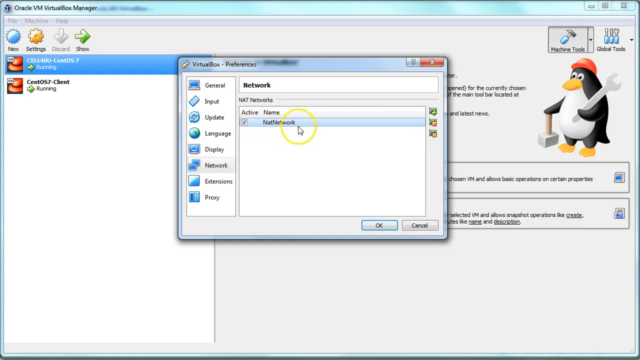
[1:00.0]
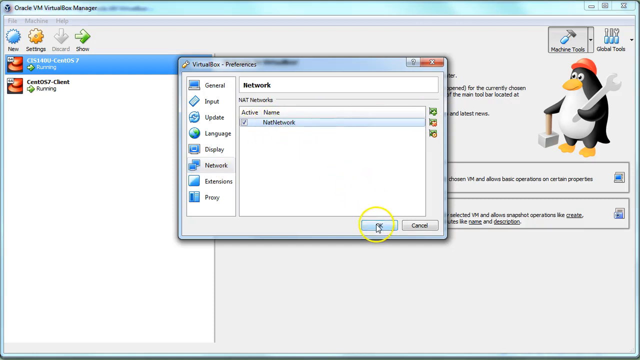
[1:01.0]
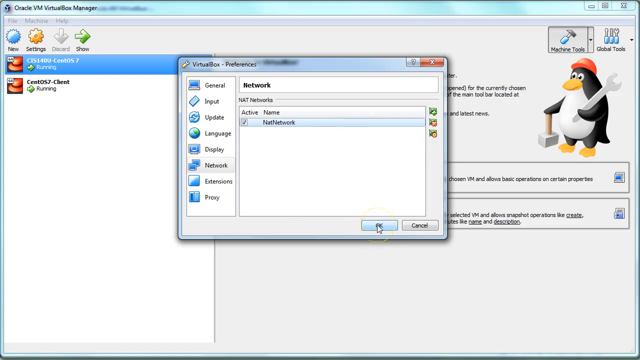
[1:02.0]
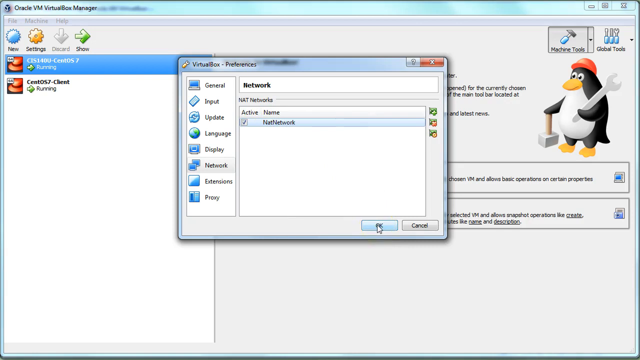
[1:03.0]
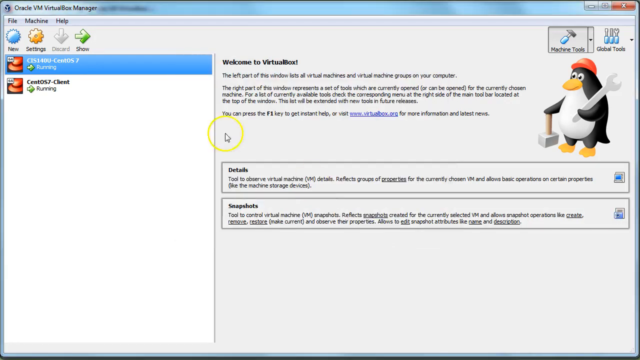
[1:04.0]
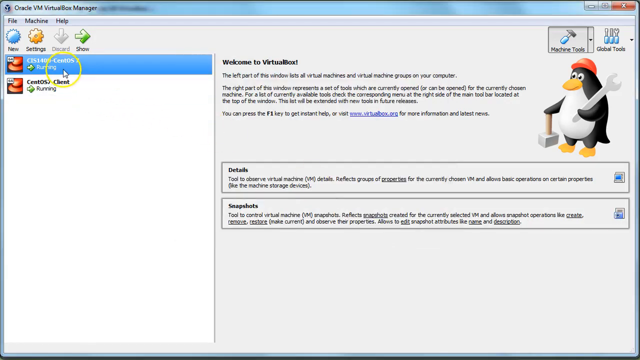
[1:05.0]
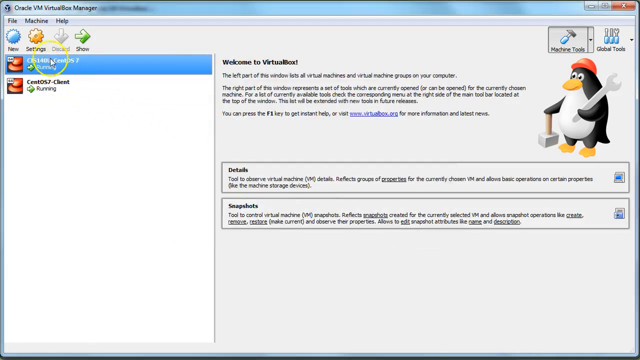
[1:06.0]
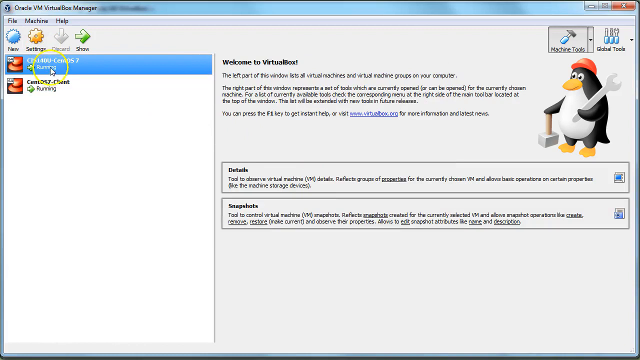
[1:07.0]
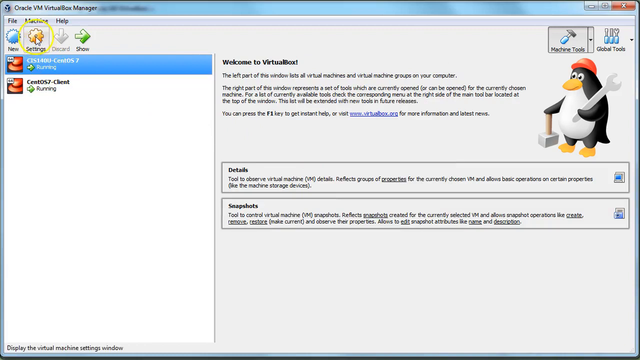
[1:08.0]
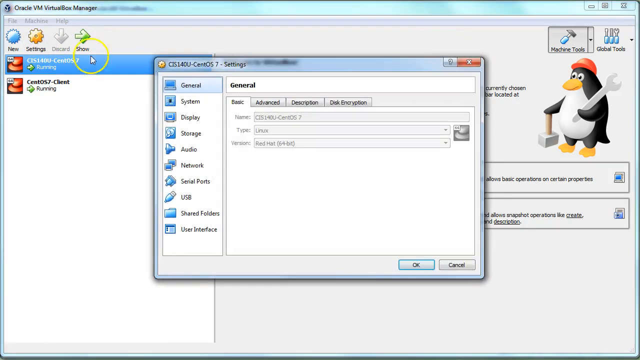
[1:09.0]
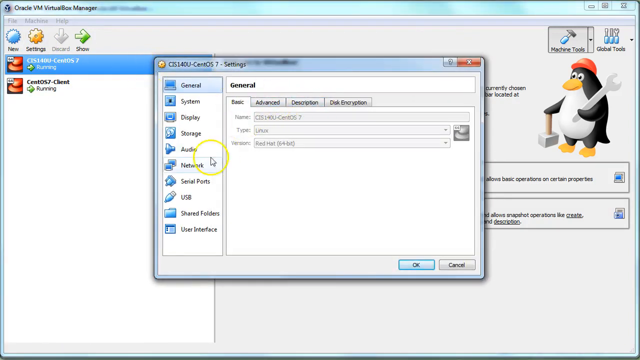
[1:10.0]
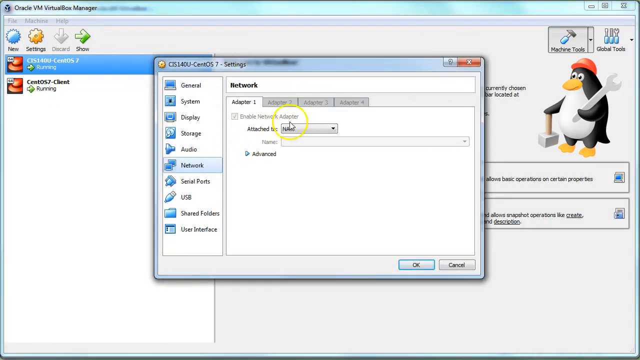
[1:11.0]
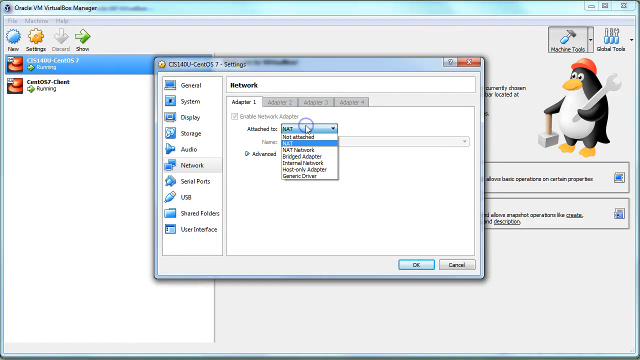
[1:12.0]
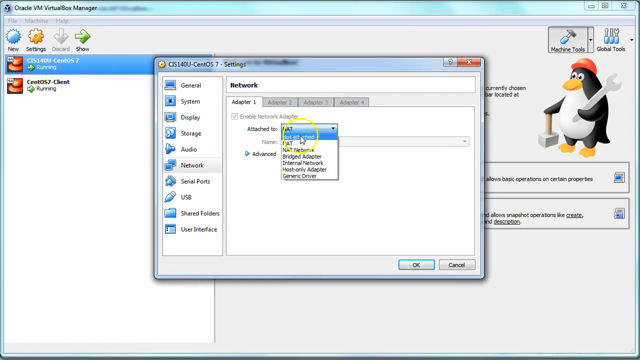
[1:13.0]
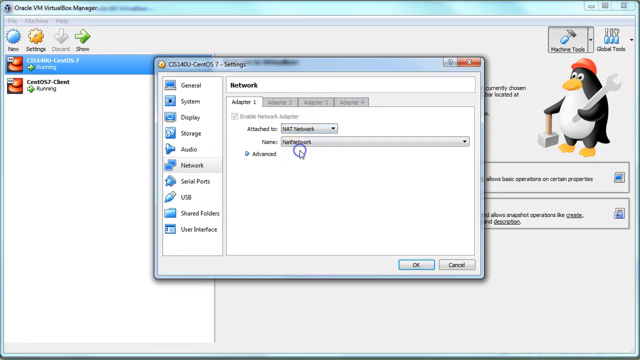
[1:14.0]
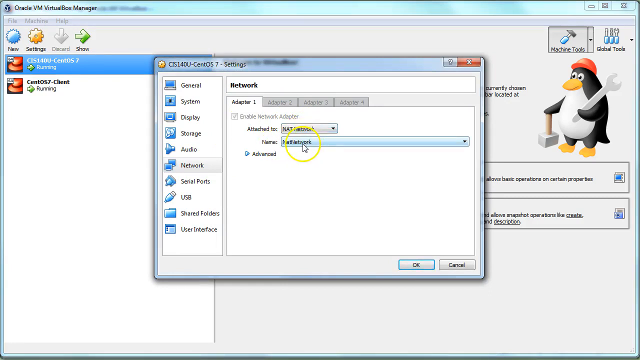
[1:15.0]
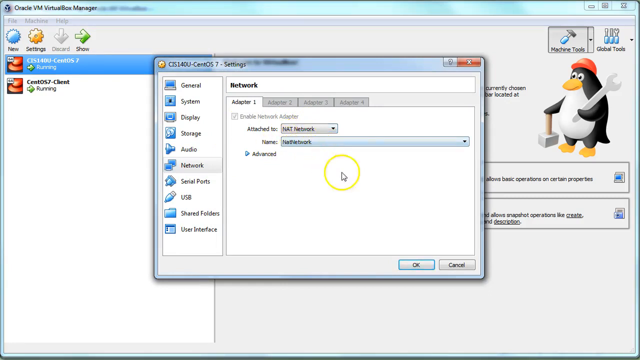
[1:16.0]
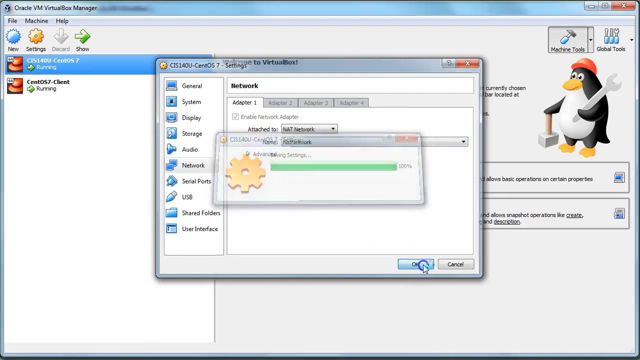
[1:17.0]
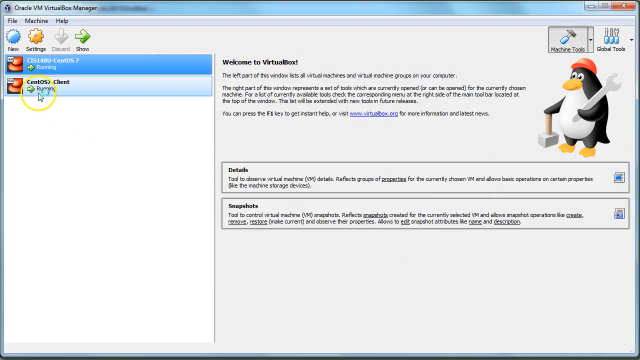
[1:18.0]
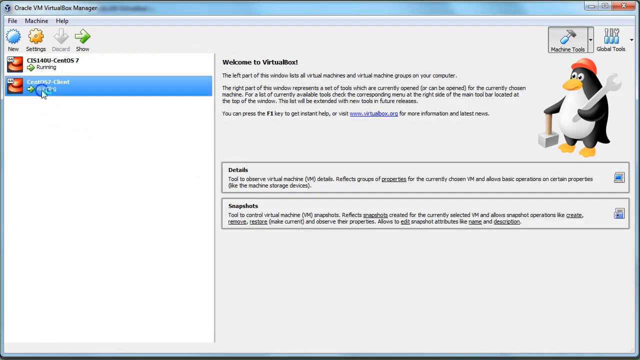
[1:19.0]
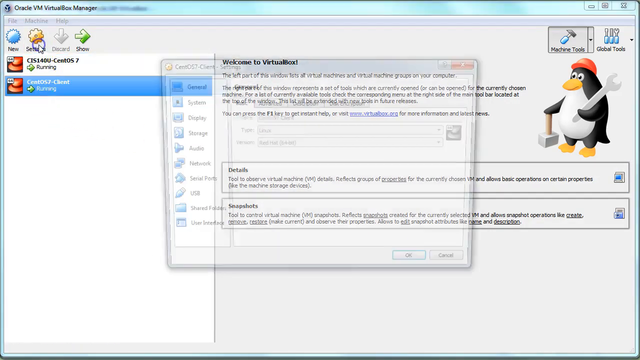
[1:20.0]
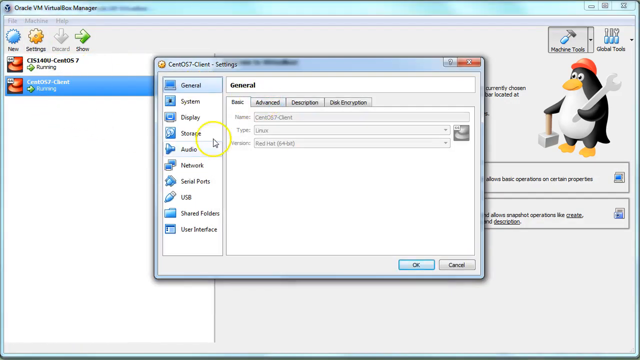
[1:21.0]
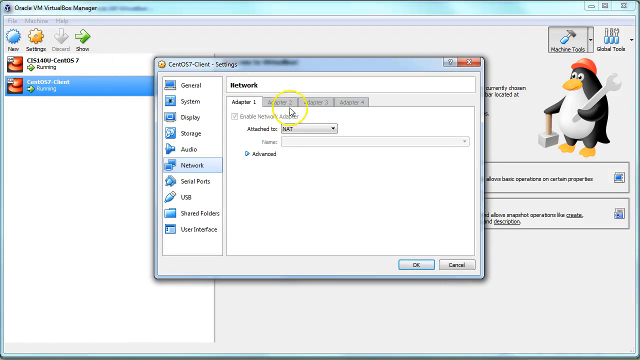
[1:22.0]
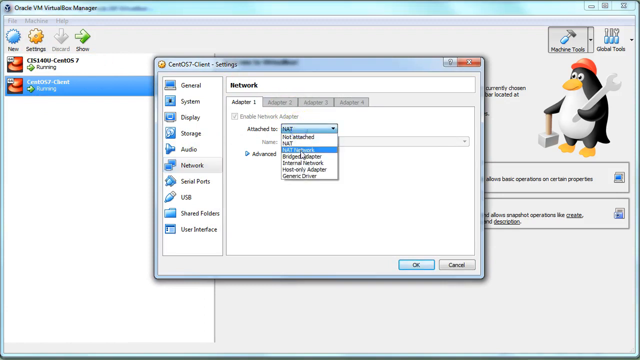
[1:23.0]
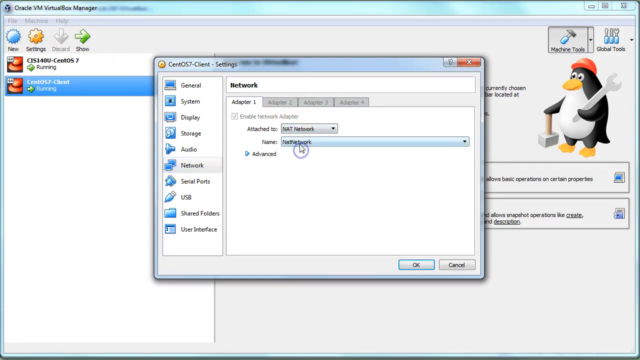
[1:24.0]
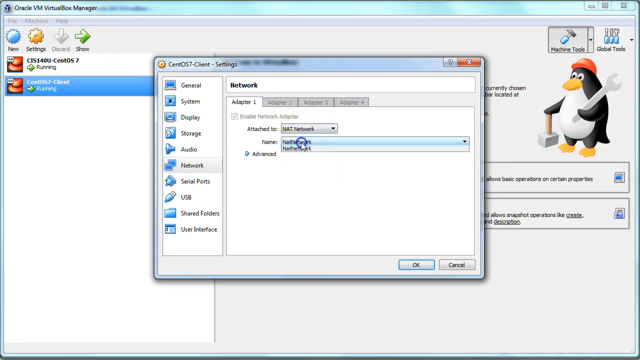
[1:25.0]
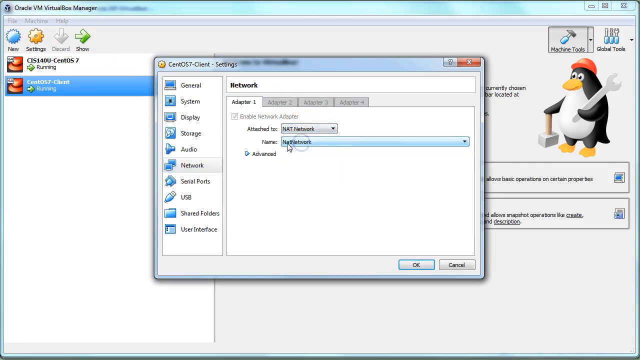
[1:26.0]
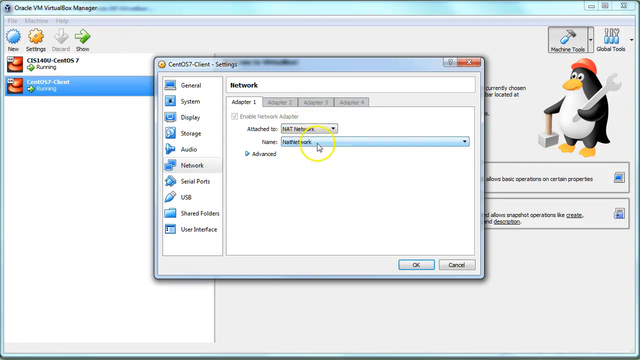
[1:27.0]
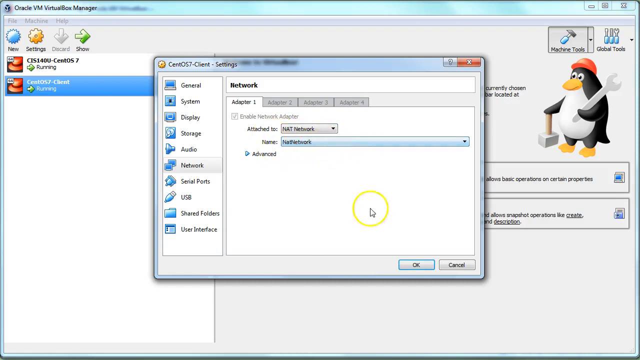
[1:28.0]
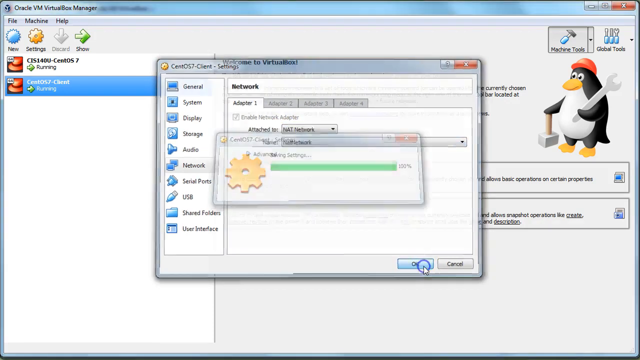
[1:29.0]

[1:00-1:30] The VirtualBox preferences menu is in the middle of the screen, with the network preferences selected on the left. In the center it shows the networks, with the one he just added, called NAT Network, as the only entry. In the background is the main page of the Oracle VM VirtualBox manager, showing his two VMs in the left panel and the introduction text on the right. His mouse clicks OK on the preferences menu, removing it from the screen. He then clicks on the first virtual machine at the top left of the panel, then clicks Settings above it, and the settings for that virtual machine appear in a menu in the middle of the screen. He clicks Network, which shows the Network menu with settings at the bottom including Attach To and a drop-down menu for selecting a network. In that drop-down he selects NAT Network, and underneath it the name NAT Network appears. He clicks OK. He then clicks on his second virtual machine and does the same: opening the Settings menu, clicking Network, attaching it to the NAT Network, and clicking OK.